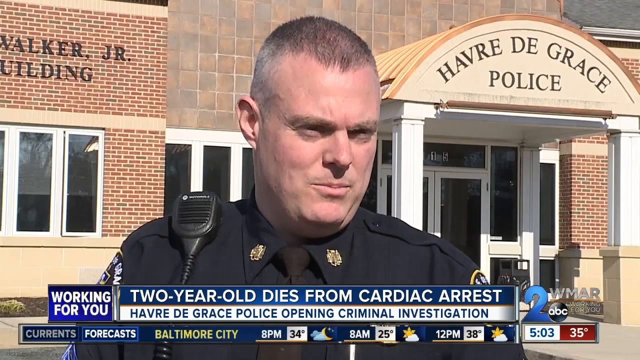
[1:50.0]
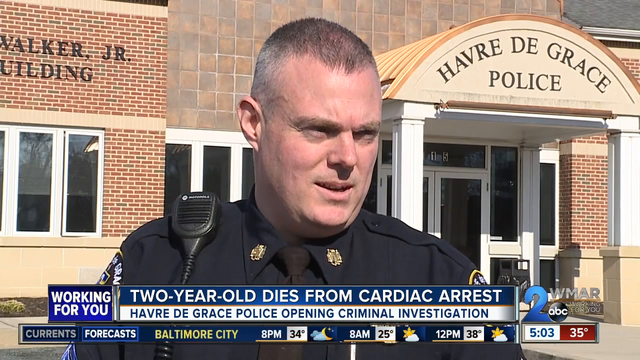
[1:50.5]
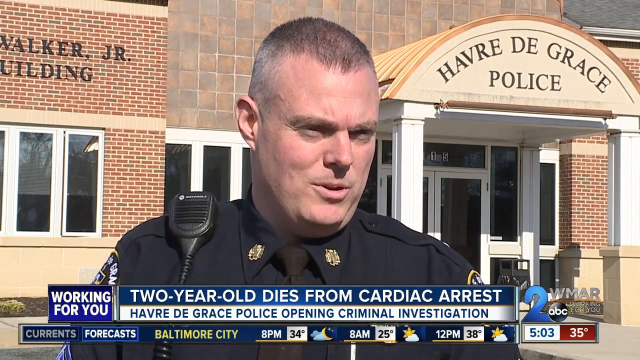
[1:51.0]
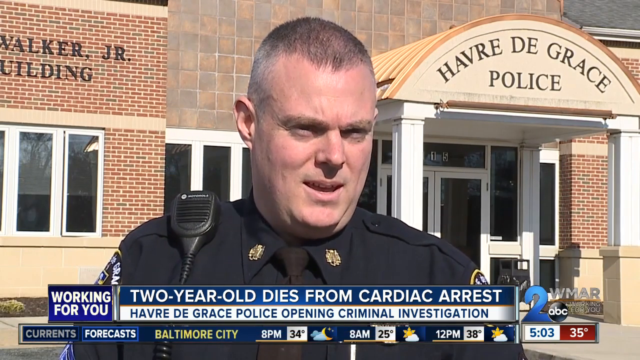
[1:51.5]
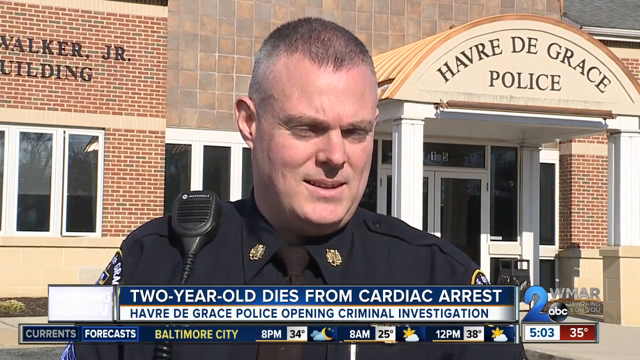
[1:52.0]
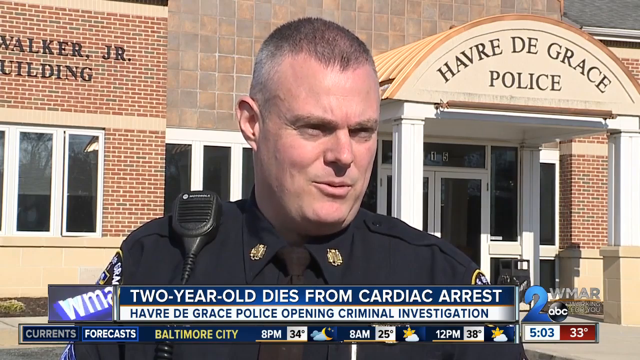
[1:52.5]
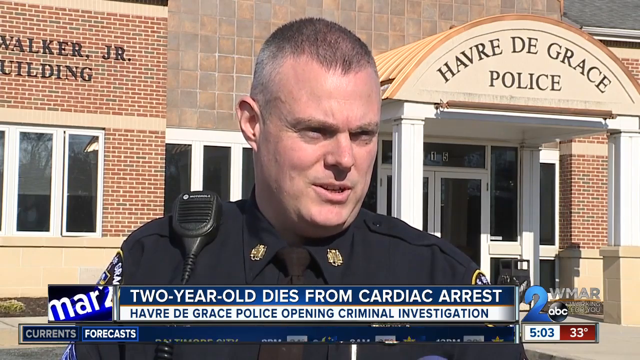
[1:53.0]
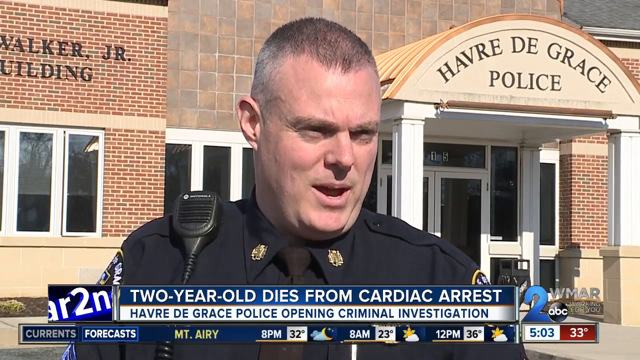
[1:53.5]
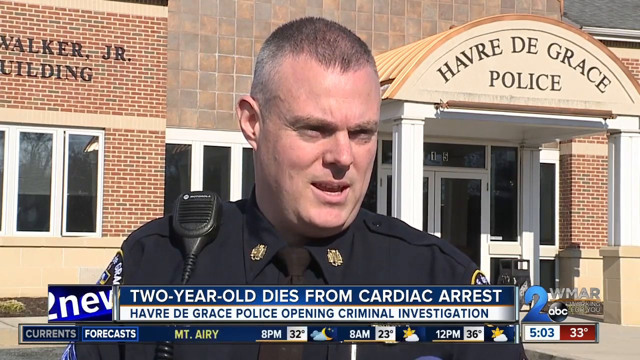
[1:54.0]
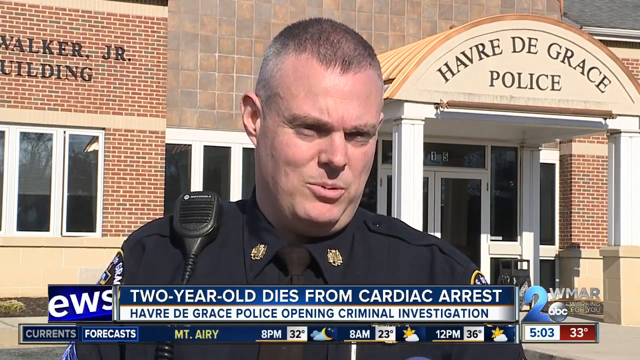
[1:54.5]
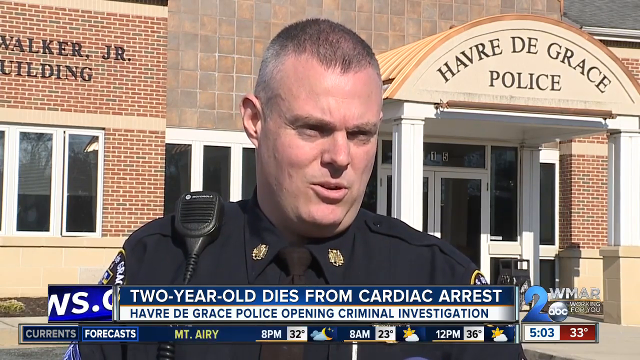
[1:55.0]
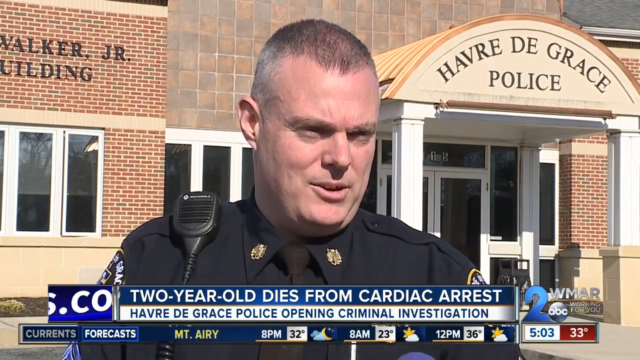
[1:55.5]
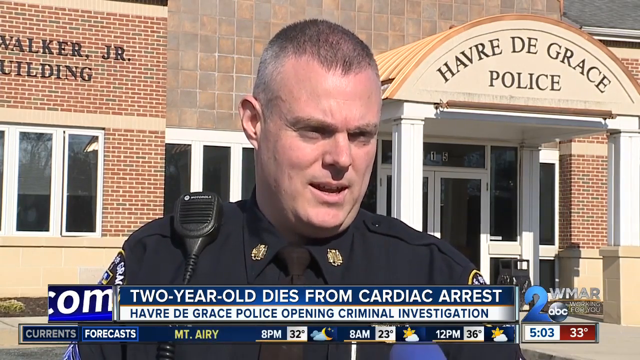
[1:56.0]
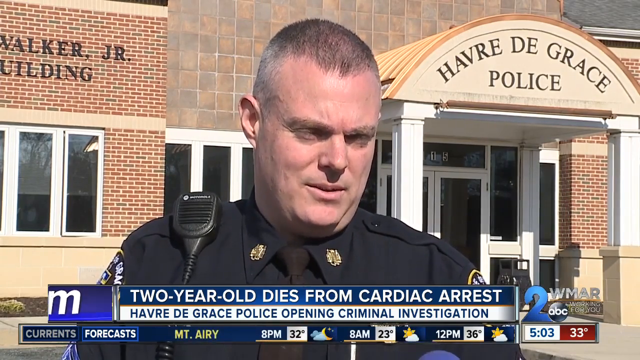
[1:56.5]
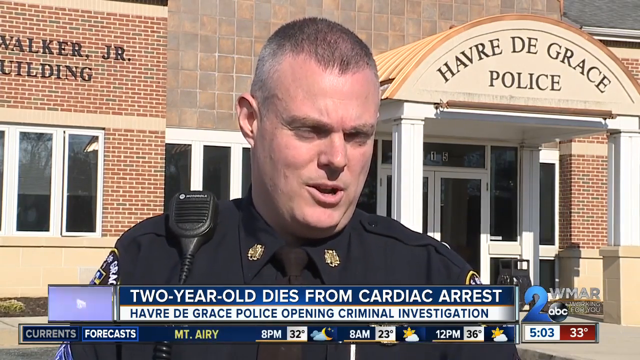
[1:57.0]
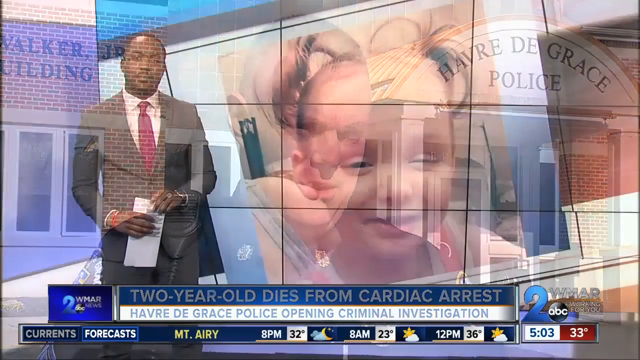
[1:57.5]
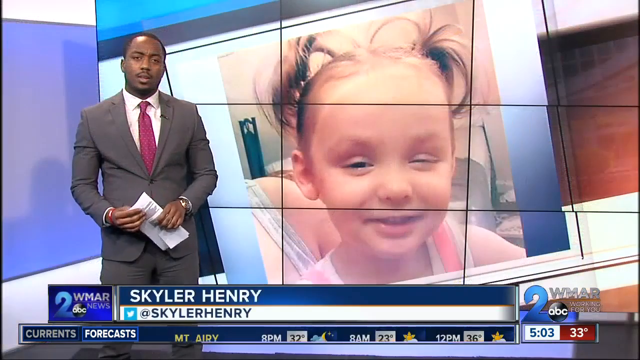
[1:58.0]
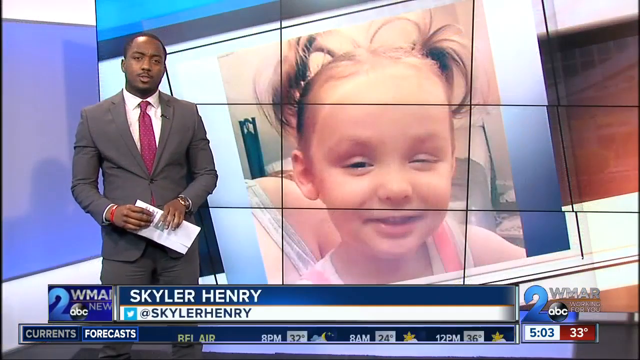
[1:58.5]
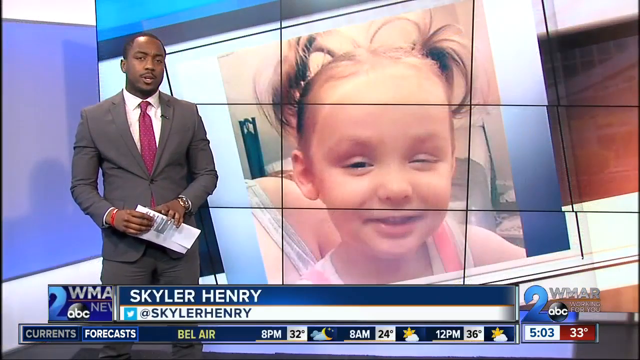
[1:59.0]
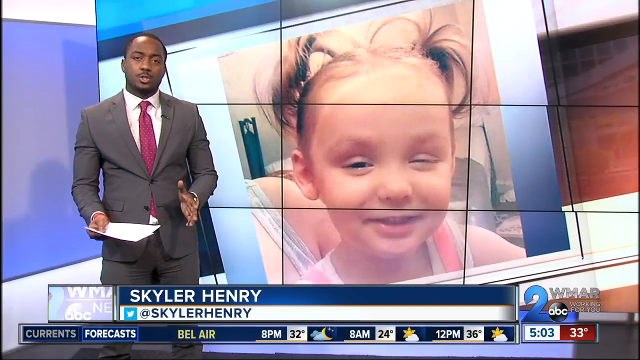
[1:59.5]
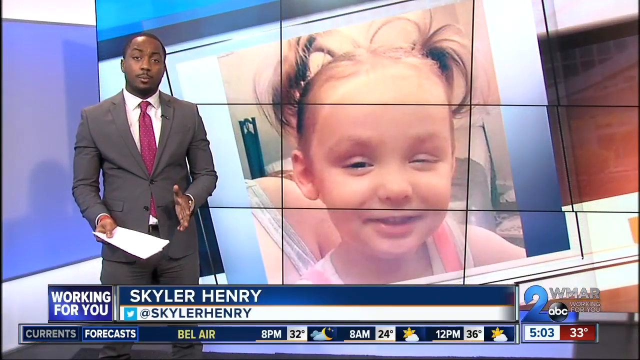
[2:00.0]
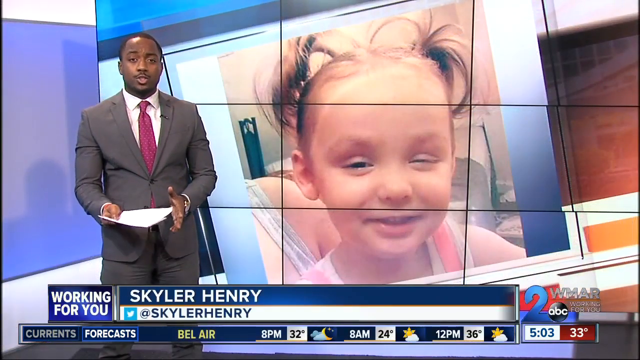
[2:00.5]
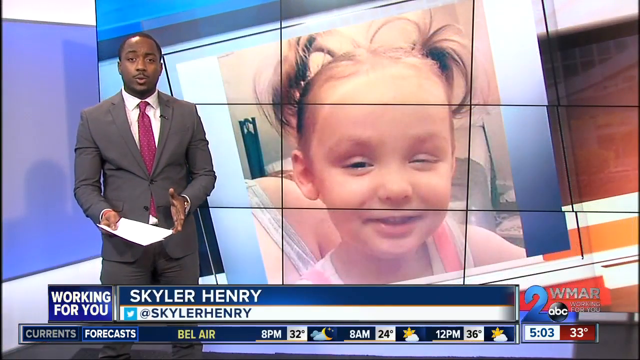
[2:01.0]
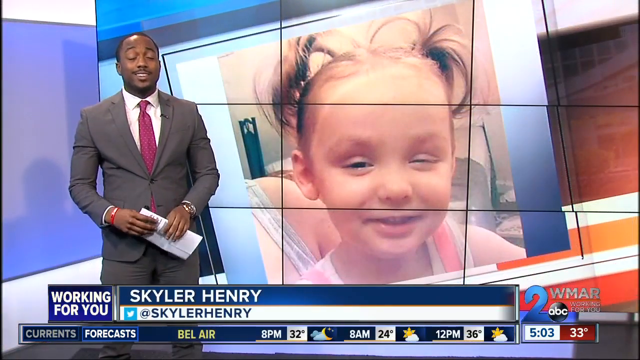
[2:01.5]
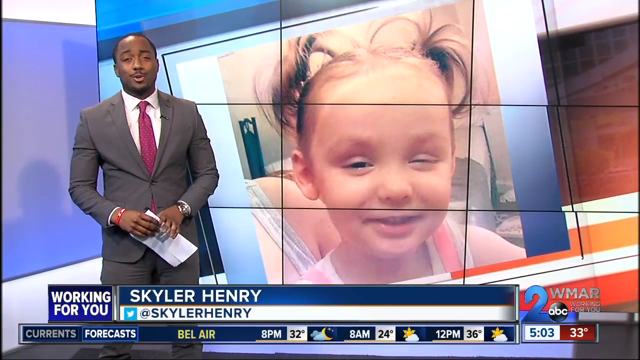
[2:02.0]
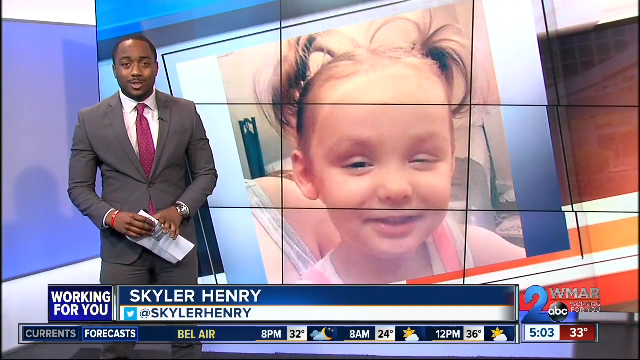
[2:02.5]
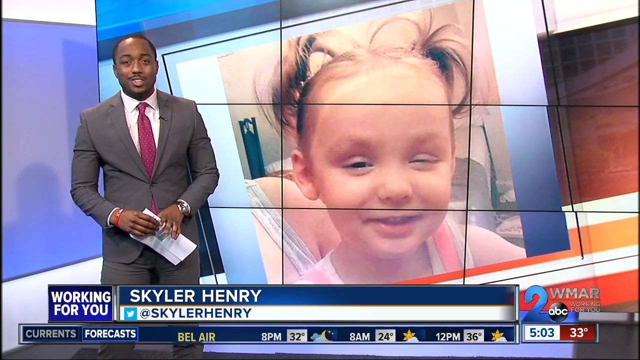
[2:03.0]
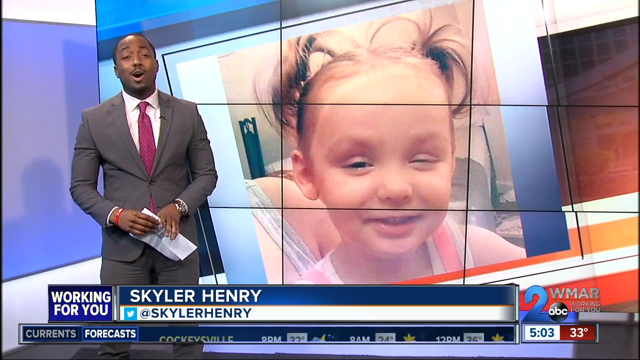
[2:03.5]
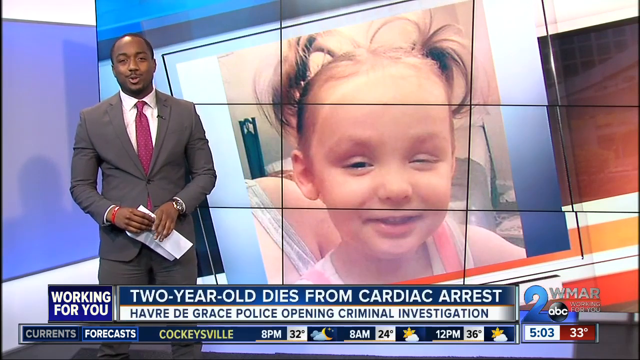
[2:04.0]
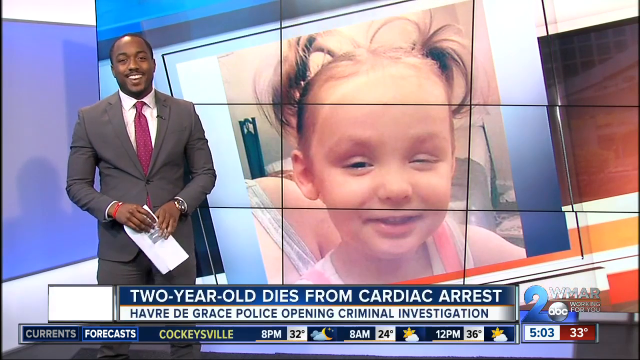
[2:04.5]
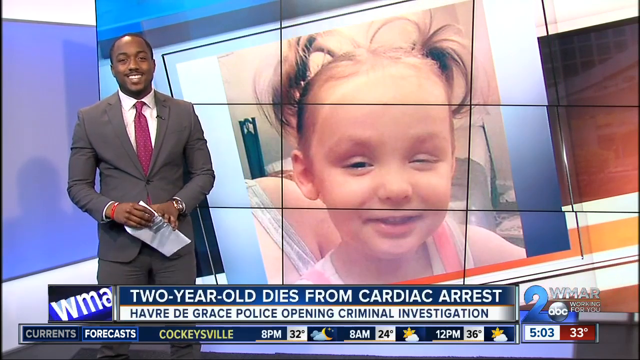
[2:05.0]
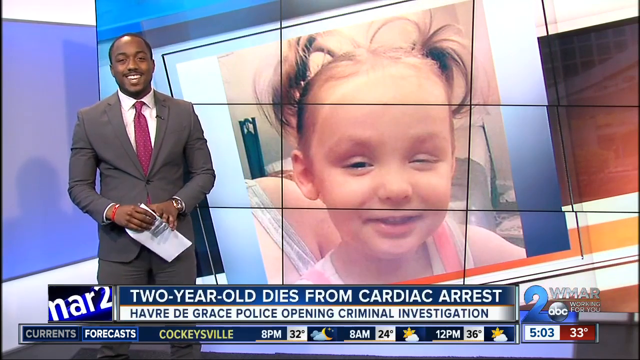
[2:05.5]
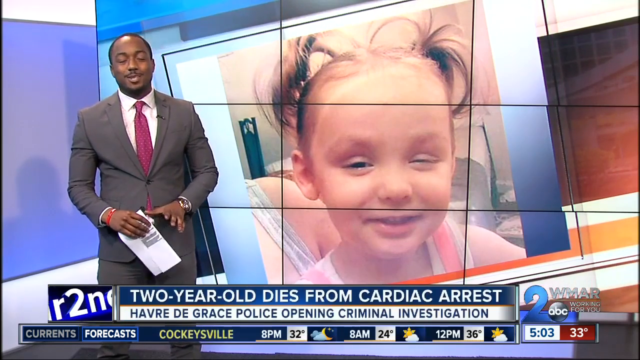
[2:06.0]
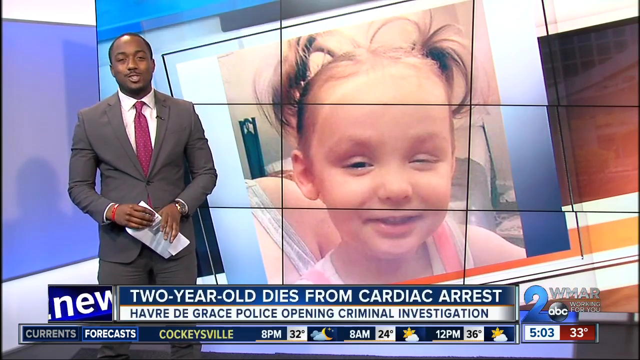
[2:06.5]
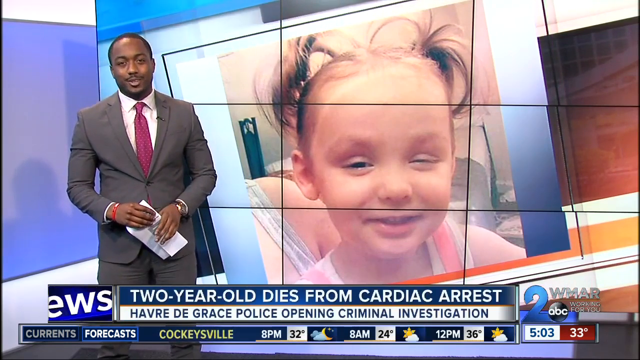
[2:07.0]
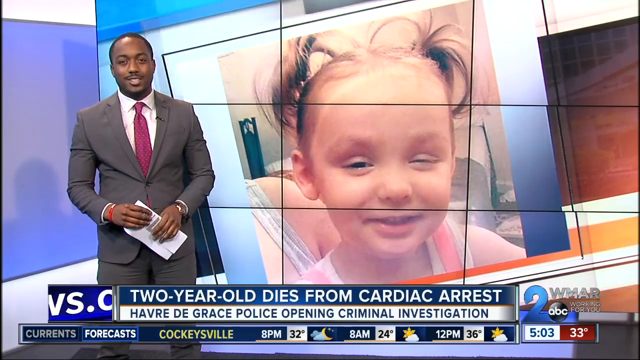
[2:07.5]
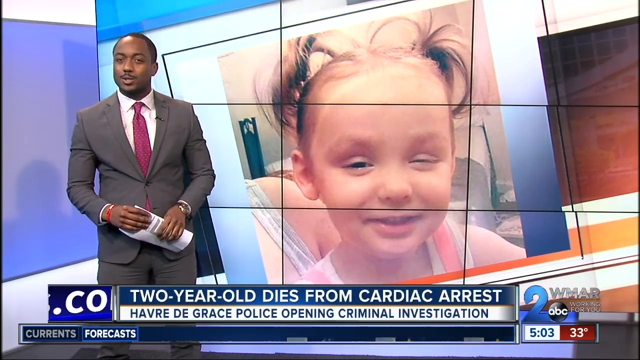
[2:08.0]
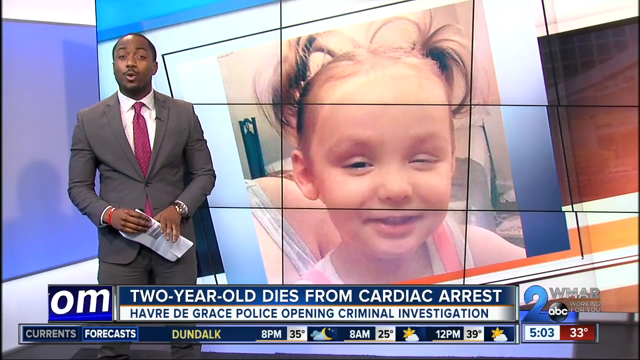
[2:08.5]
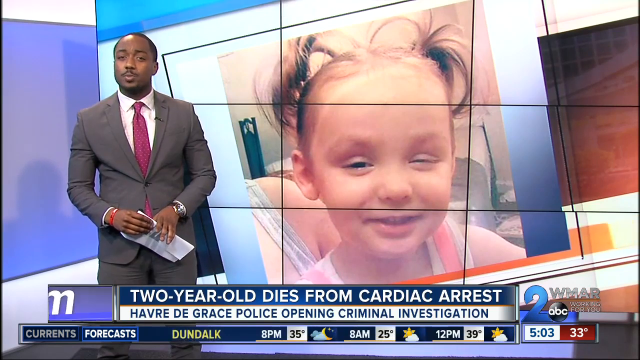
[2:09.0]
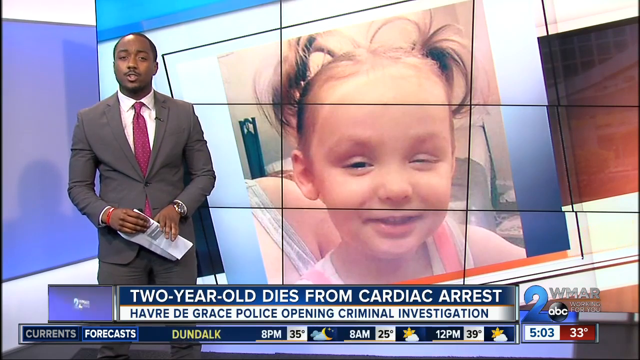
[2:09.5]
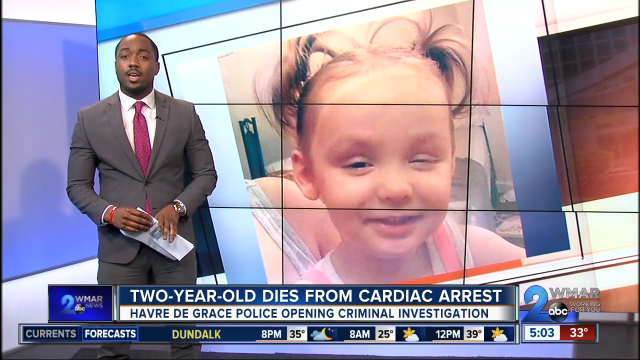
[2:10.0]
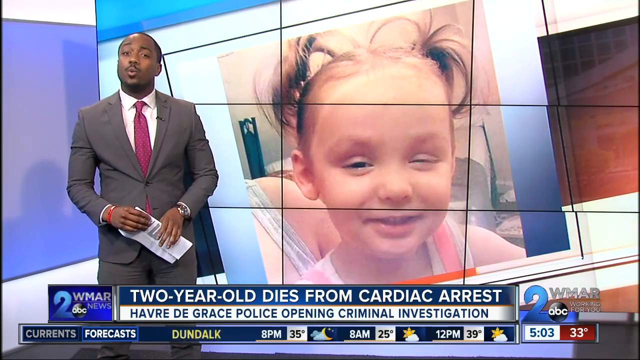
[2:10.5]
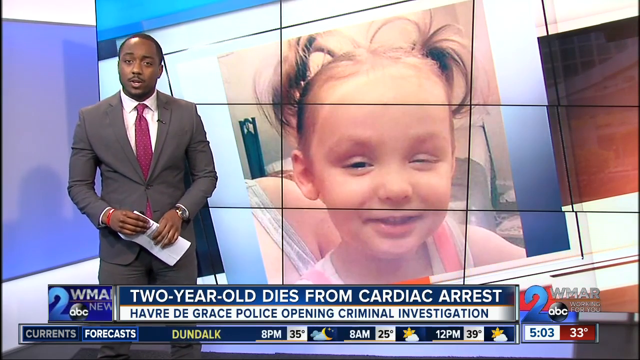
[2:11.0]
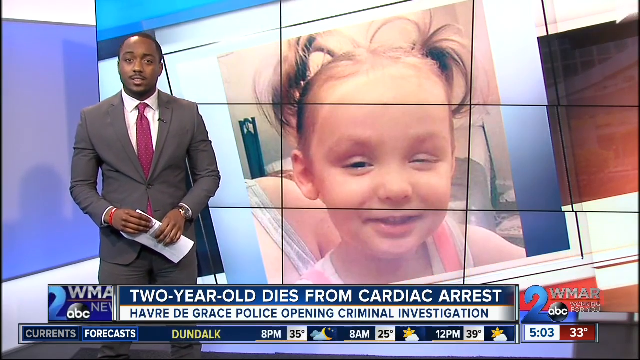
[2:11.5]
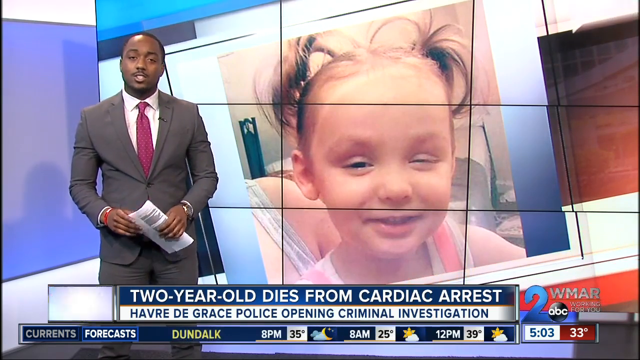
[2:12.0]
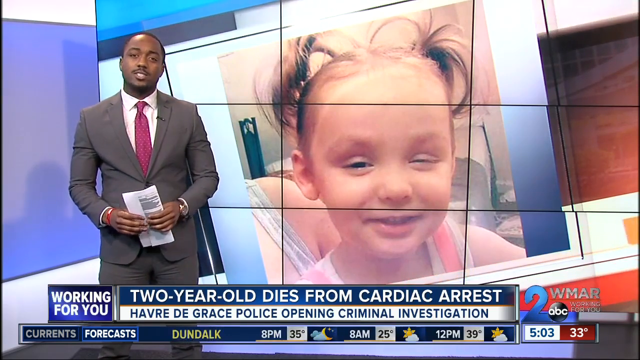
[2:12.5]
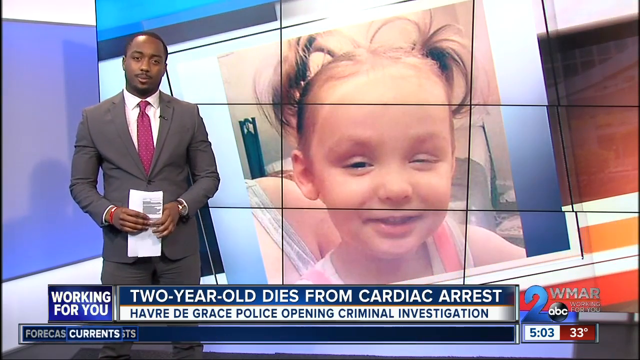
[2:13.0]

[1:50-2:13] A police officer is interviewed outside the police station; he looks about middle-aged and has no facial hair. The scene shifts to a news anchor in the newsroom, Kyler Henry, who seems to be taking over the report. He holds a piece of paper in his hand and wears a watch or wristband on his wrist. The text reads "two-year-old dies from cardiac arrest" and "Harvey Day Grace Police opening criminal investigation."